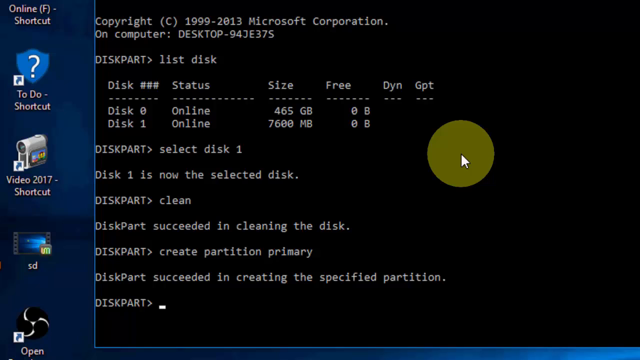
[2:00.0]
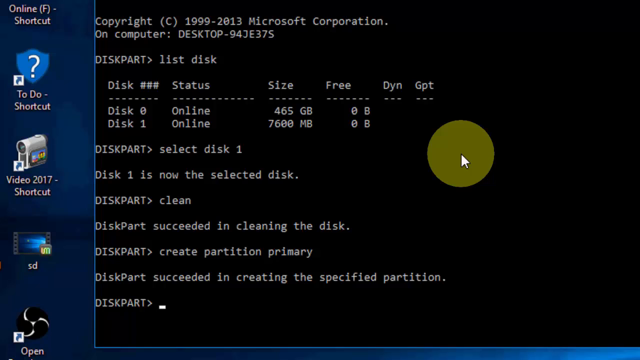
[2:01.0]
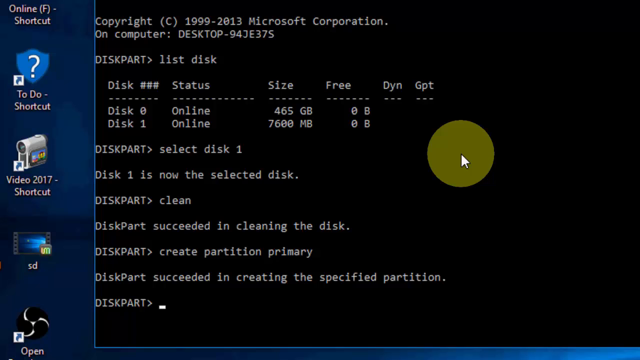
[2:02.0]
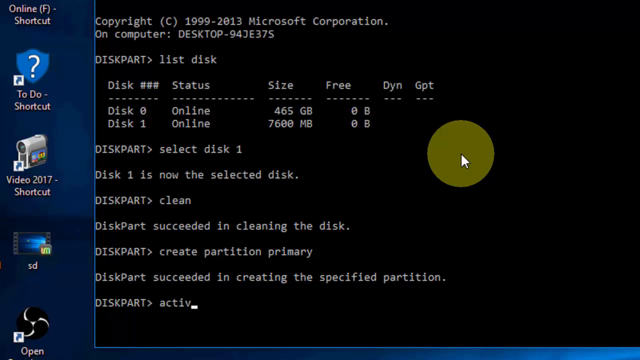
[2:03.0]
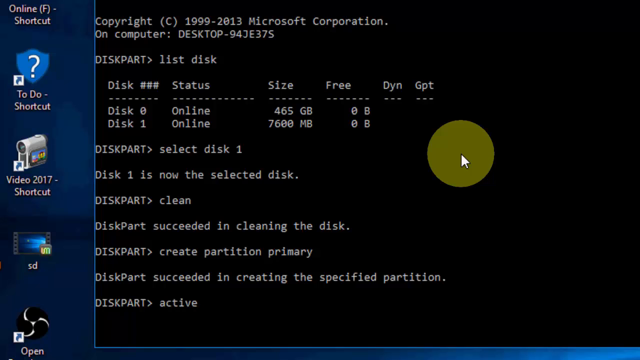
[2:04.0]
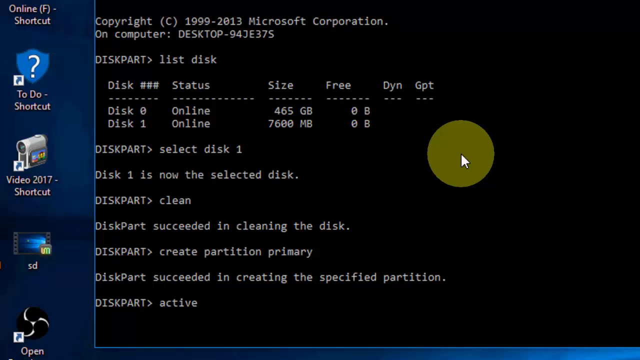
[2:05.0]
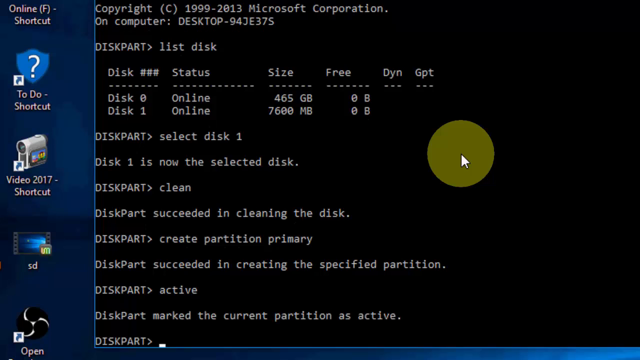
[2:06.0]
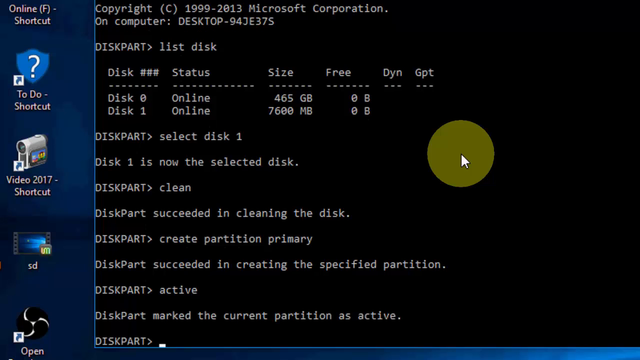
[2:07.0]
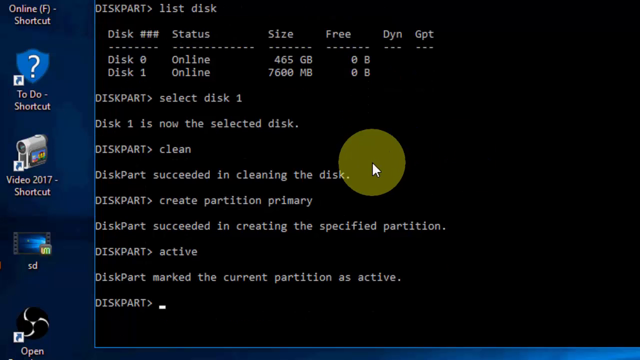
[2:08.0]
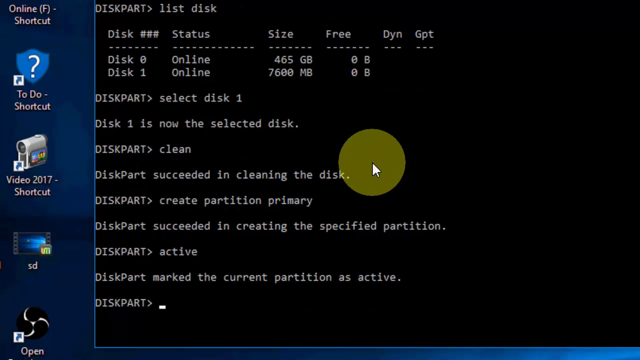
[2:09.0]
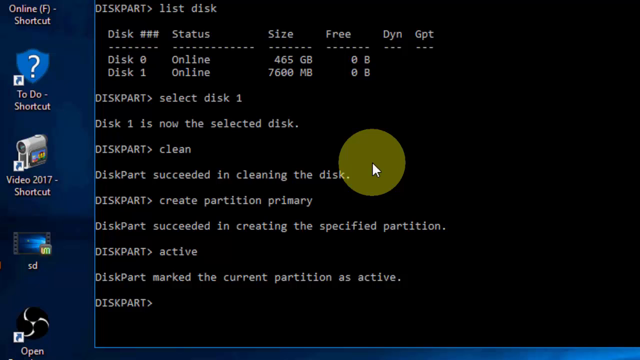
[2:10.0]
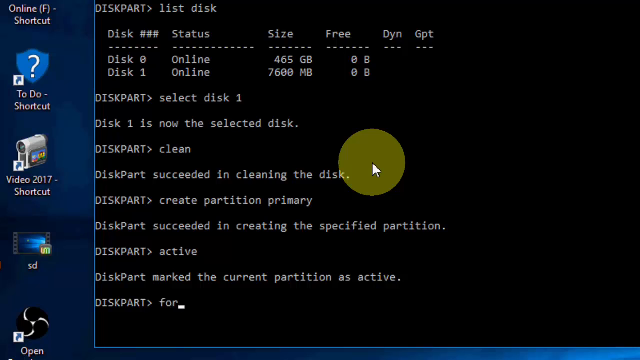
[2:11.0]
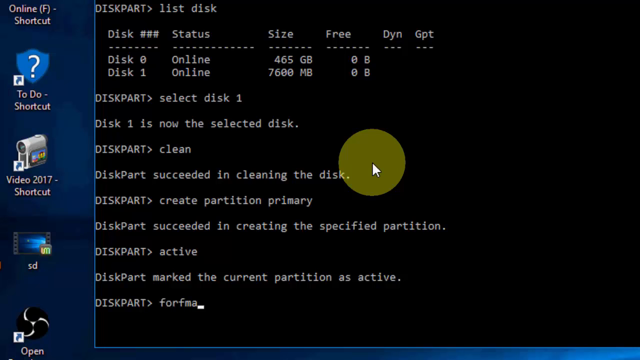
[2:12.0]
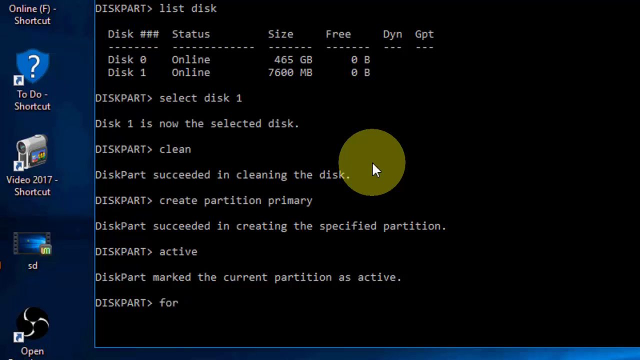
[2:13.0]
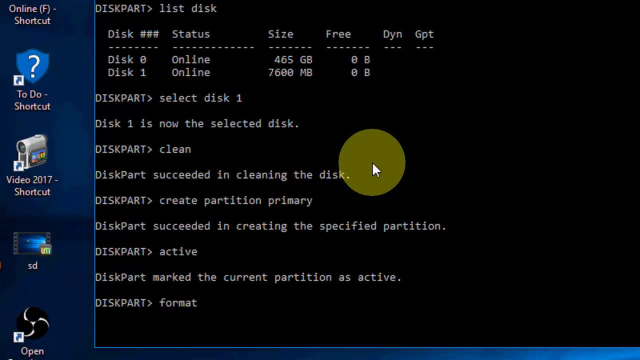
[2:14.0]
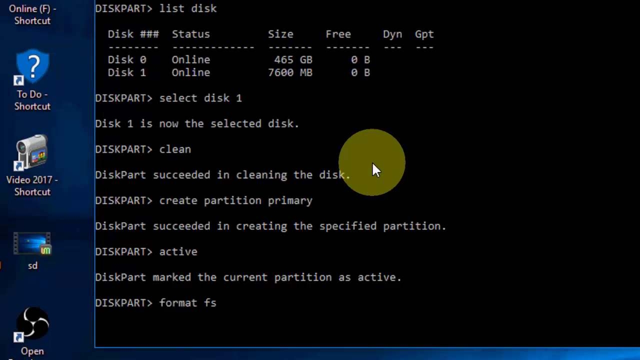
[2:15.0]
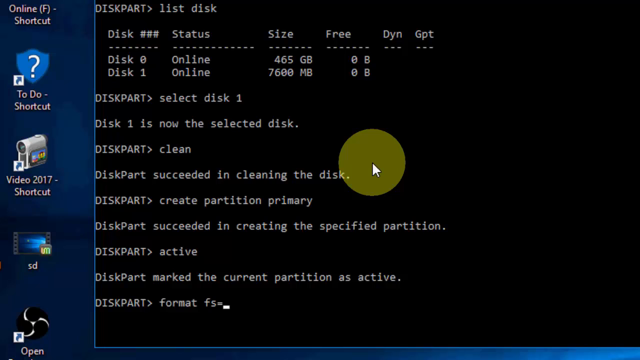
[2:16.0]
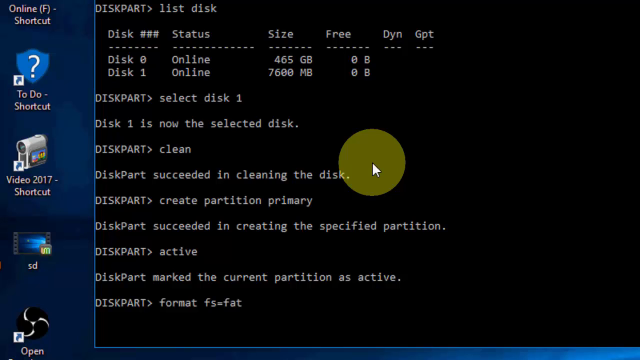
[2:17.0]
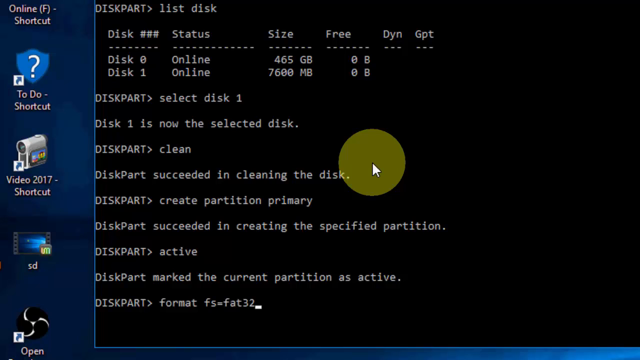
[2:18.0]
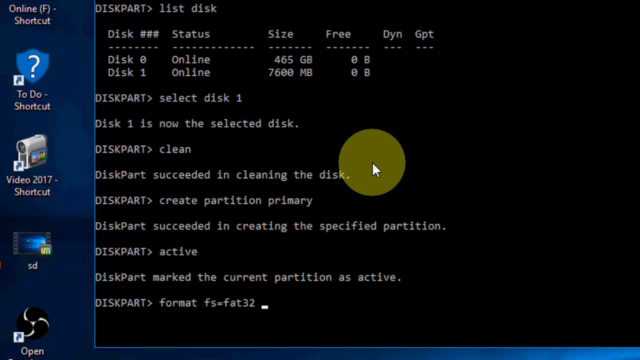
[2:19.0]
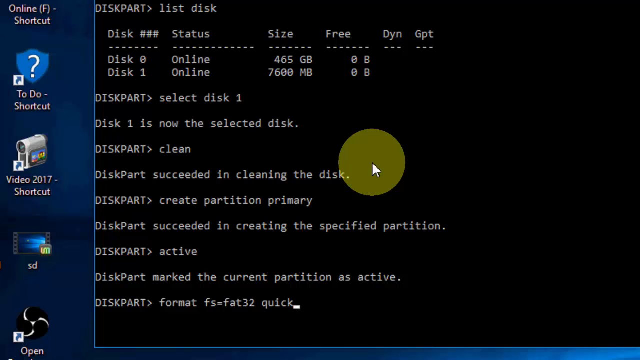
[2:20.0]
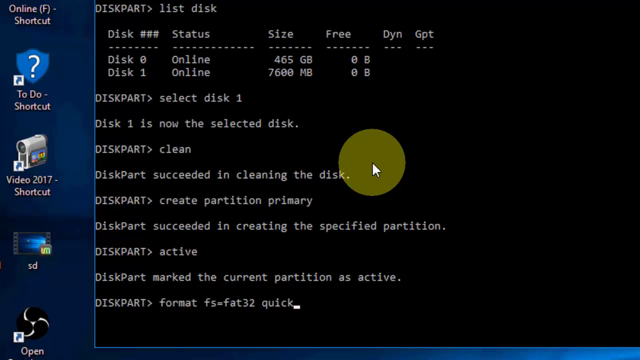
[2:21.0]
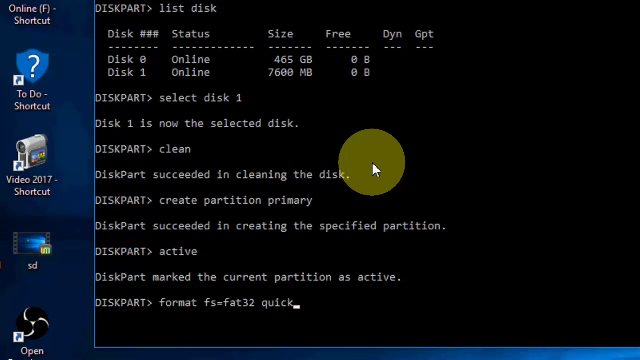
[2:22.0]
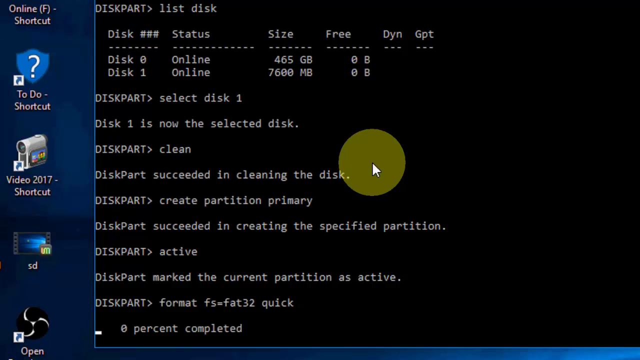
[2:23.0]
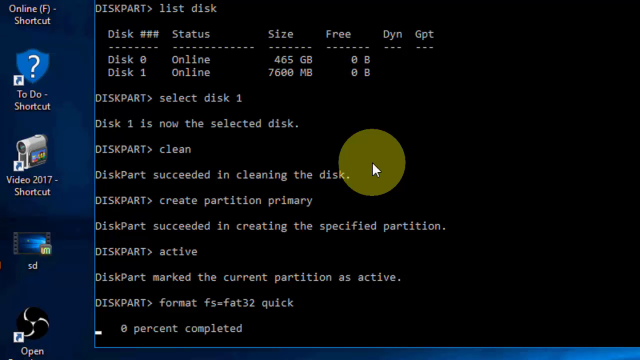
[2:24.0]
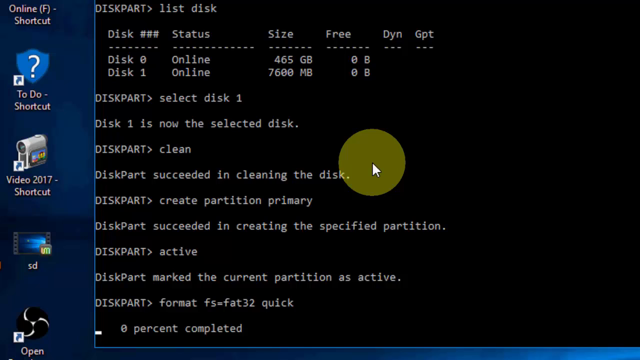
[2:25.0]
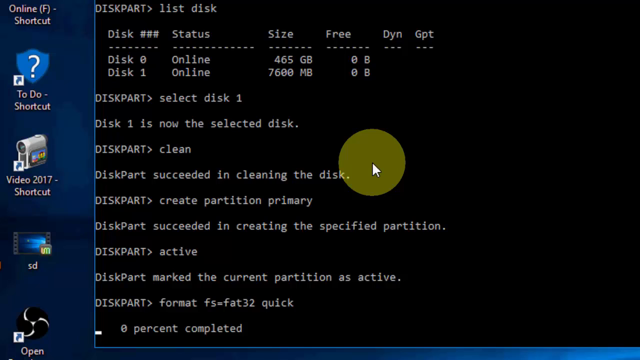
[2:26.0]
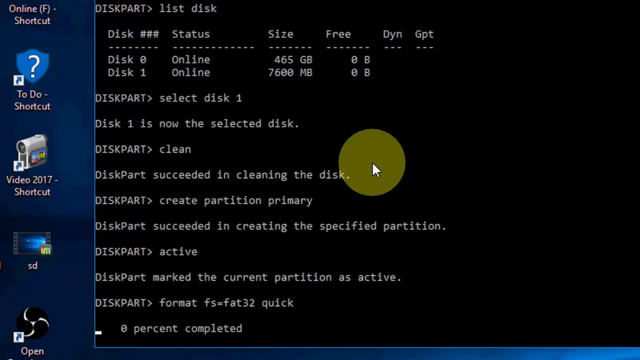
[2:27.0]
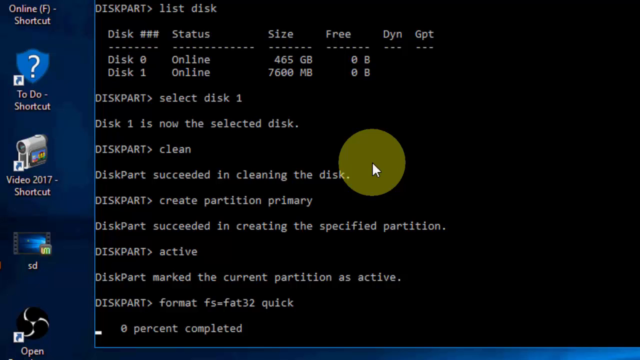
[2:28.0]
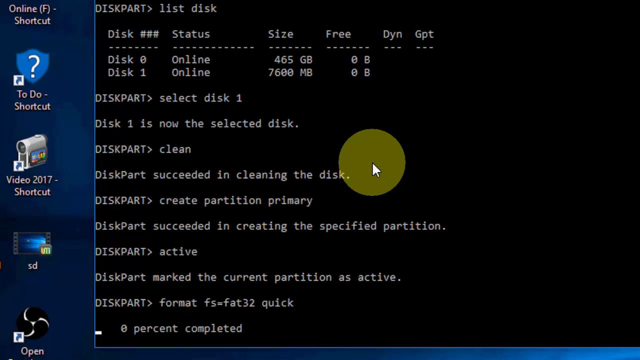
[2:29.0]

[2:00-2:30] The person is still using the command prompt as administrator. In DiskPart they type "active" and press enter, and below it states that DiskPart marked the current partition as active. With the prompt waiting for the next command, they type "format fs-fat32 quick" and press enter, and it shows "0% completed" below. The formatting of the disk is then displayed. On the left side of the screen the desktop applications are still visible: Online, To-Do Shortcut and Video 2017 Shortcut, whose icon is a camcorder.